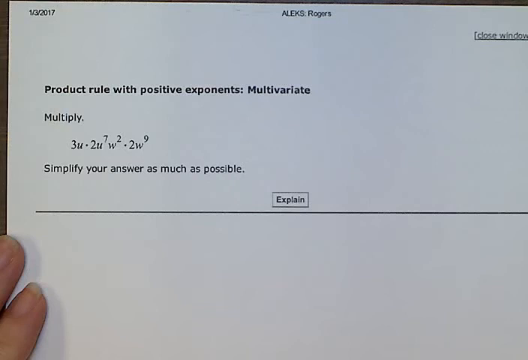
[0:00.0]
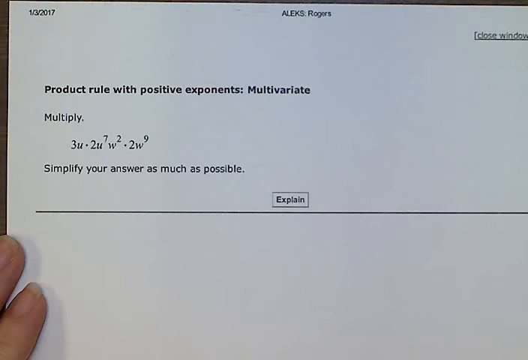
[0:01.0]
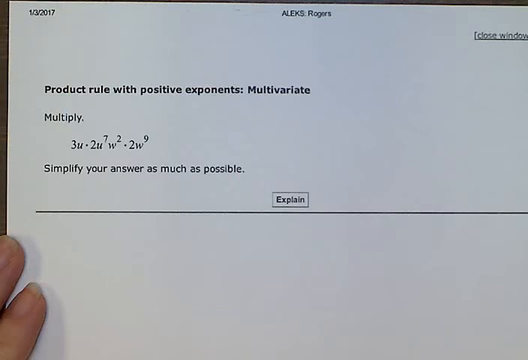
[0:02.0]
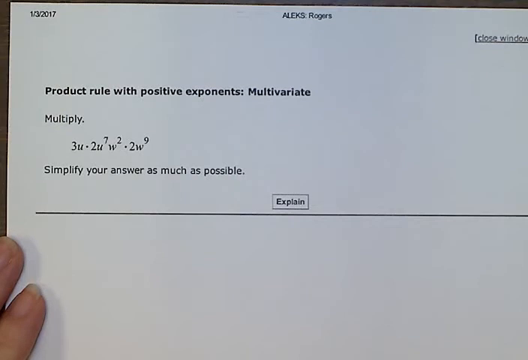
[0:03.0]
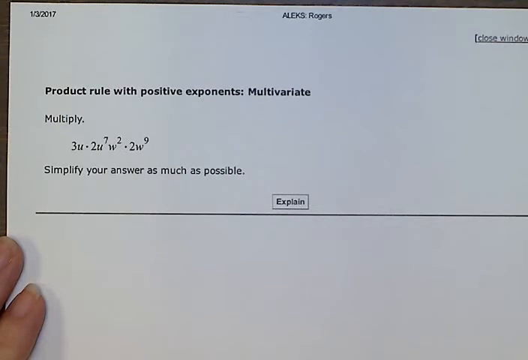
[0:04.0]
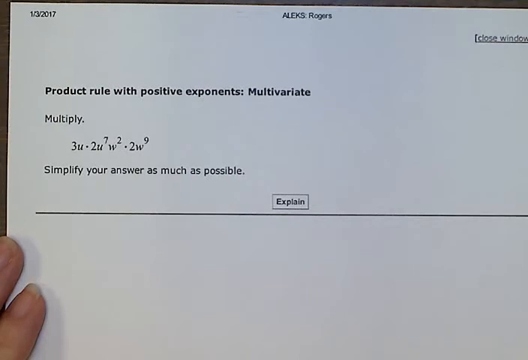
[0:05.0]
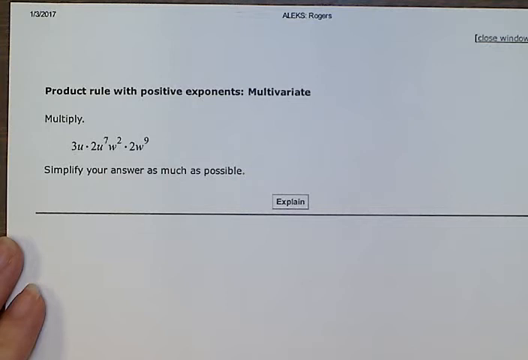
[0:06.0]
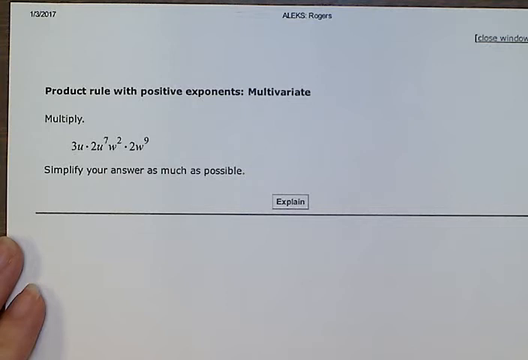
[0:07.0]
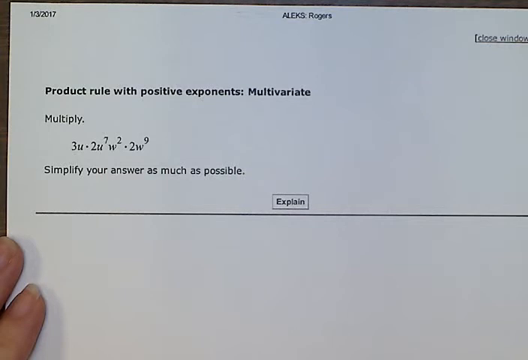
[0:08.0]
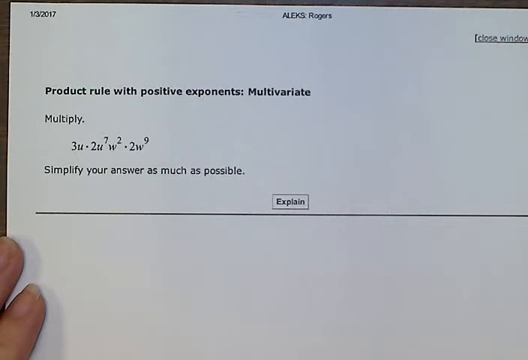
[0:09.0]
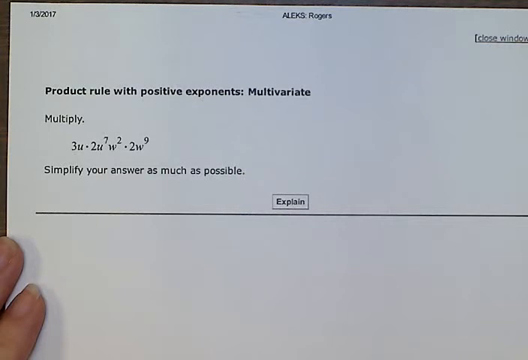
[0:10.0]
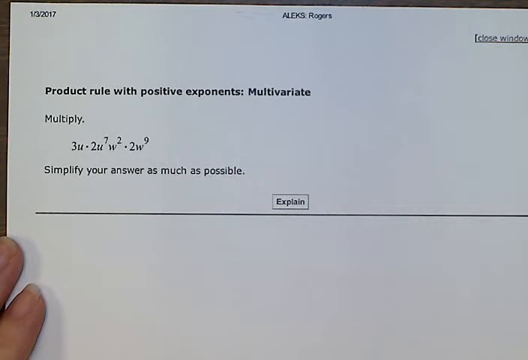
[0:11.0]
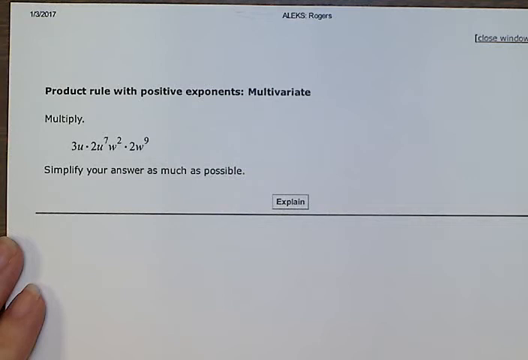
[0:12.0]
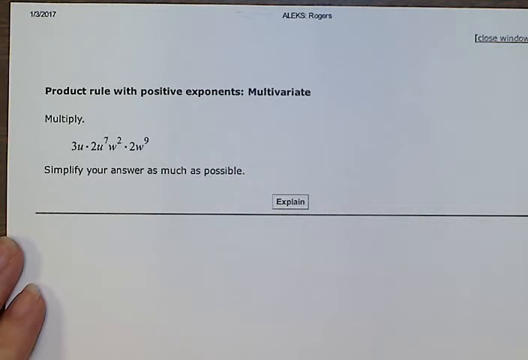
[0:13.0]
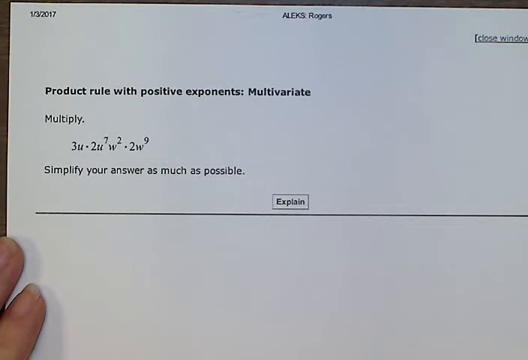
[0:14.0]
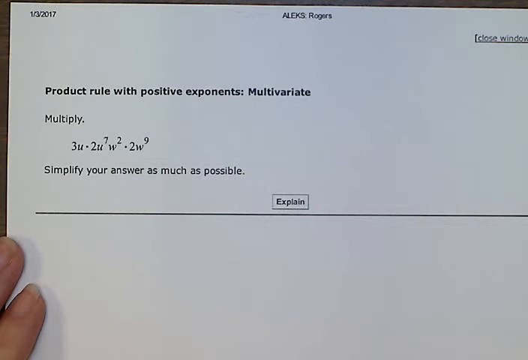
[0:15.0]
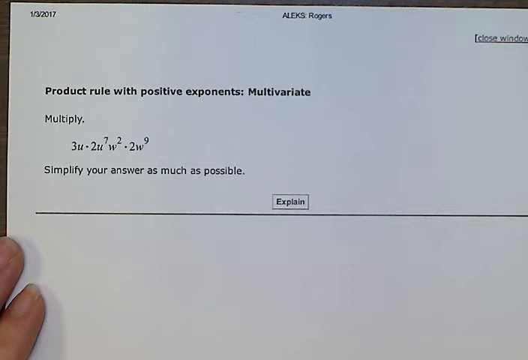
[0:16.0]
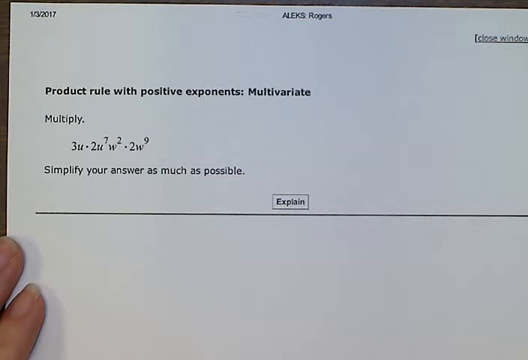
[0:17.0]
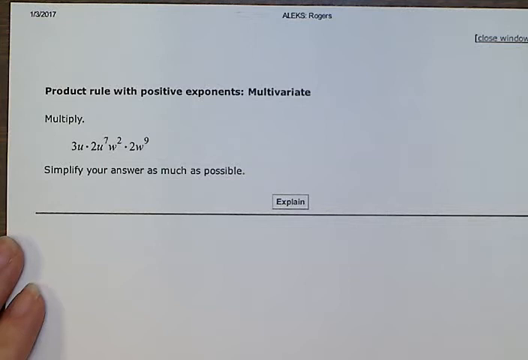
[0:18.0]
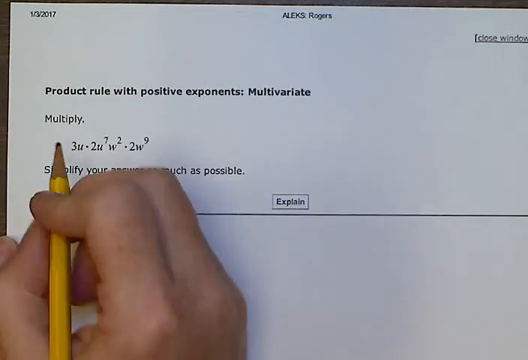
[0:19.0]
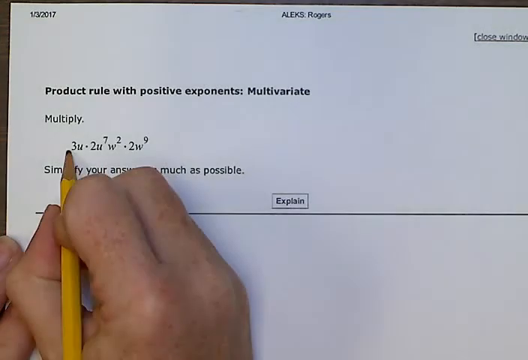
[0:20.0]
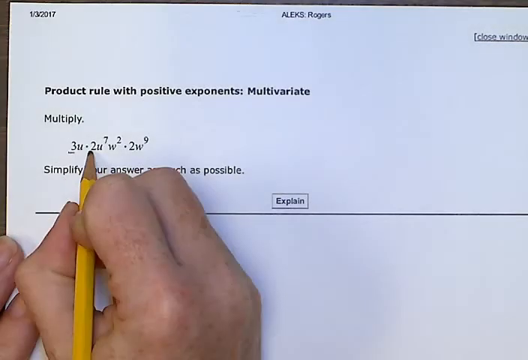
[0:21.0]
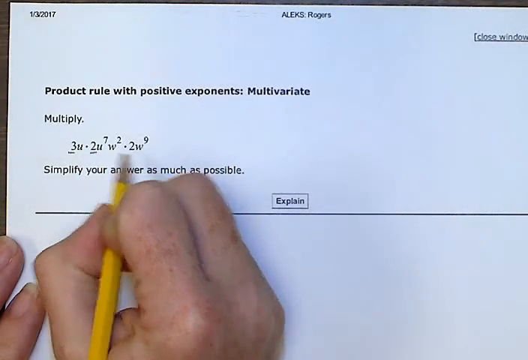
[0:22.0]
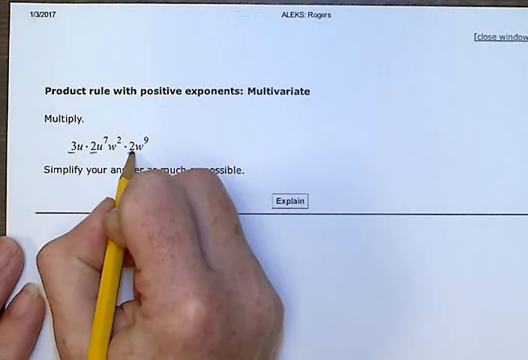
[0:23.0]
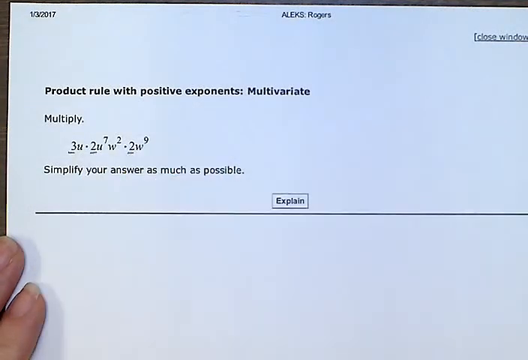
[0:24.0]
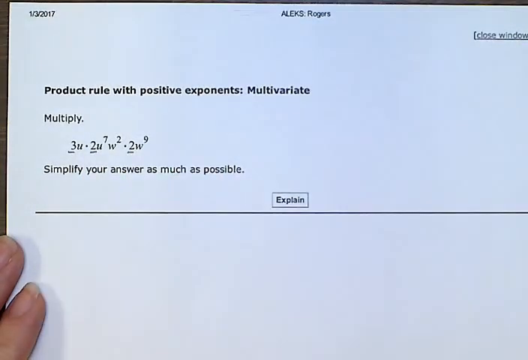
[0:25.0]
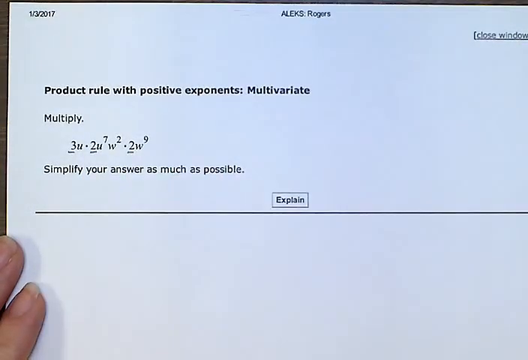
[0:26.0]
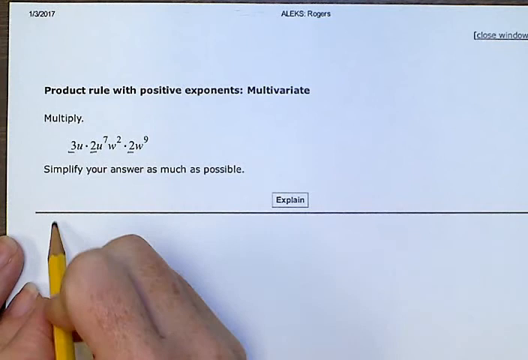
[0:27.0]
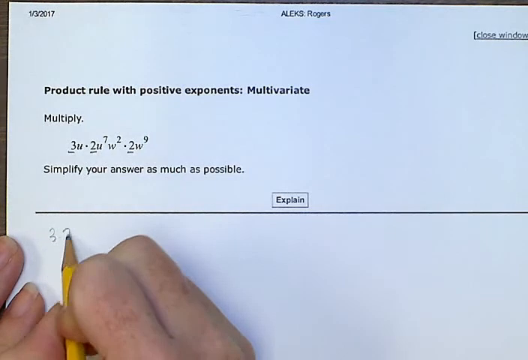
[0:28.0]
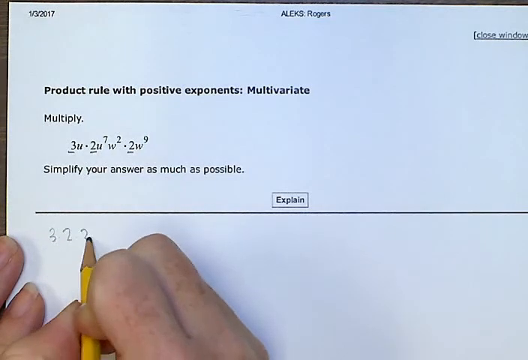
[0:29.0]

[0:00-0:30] A white piece of paper is shown. In the bottom left-hand corner, two fingers and the white of a nail are visible. In the top left-hand corner are the numbers "1/3/2017". In the centre of the top section it says "Alex.Rogers", and in the upper right-hand corner it says "close window". Underneath the date on the left side is a white section with no writing. About a quarter of the way down, "product rule with positive exponents multivariate" appears in bold black writing. Below that on the left it says "multiply", with a sum below it, and below that it says "simplify your answer as much as possible". Below that, in the centre, it says "explain", and underneath is a black line running from the very left side to the right. The view stays on this section for around 26 seconds, and then a right hand appears holding a yellow pencil and starts to write on the paper.